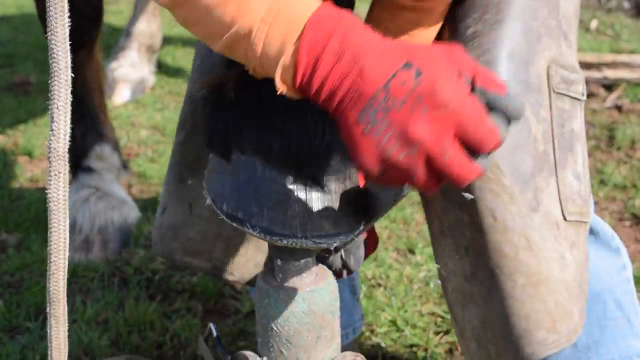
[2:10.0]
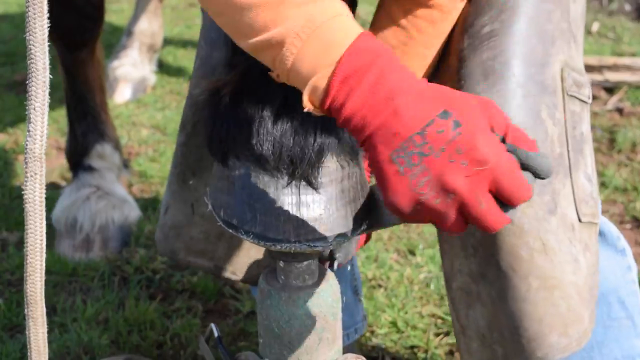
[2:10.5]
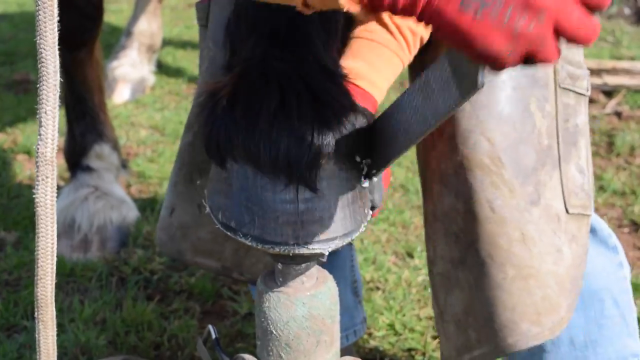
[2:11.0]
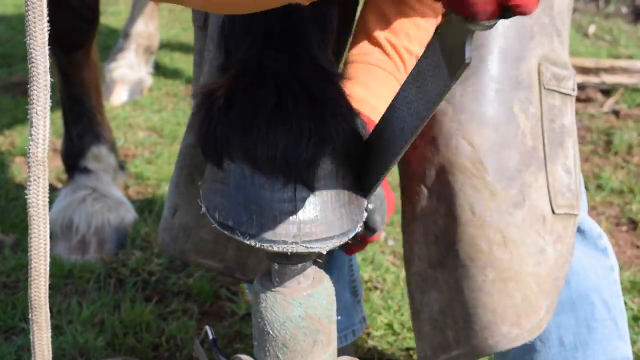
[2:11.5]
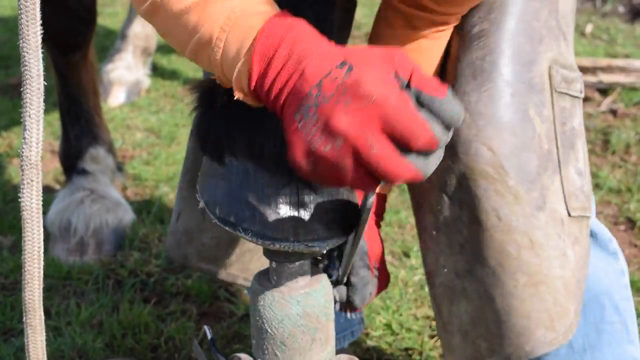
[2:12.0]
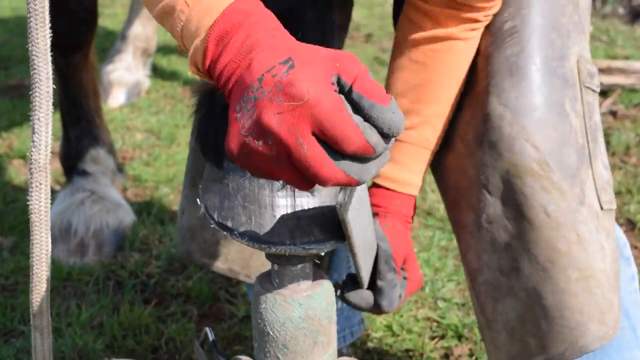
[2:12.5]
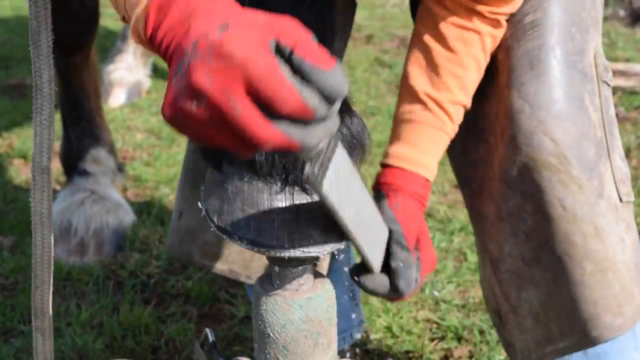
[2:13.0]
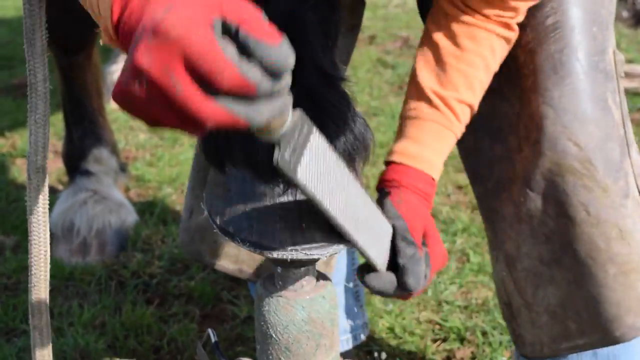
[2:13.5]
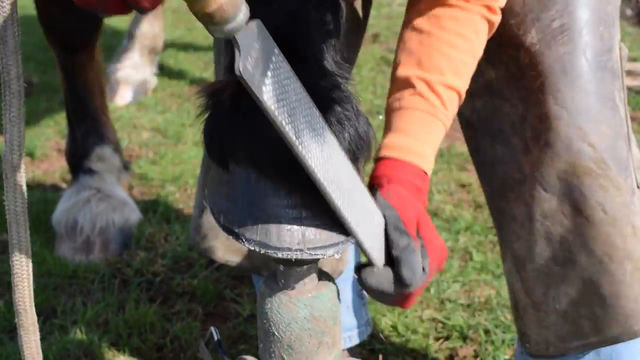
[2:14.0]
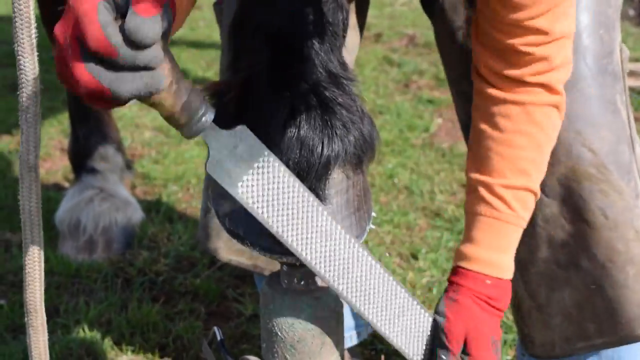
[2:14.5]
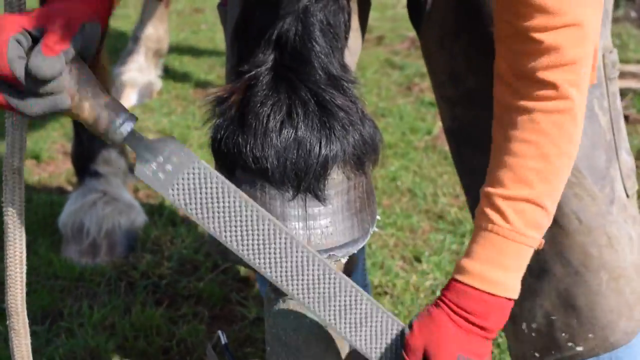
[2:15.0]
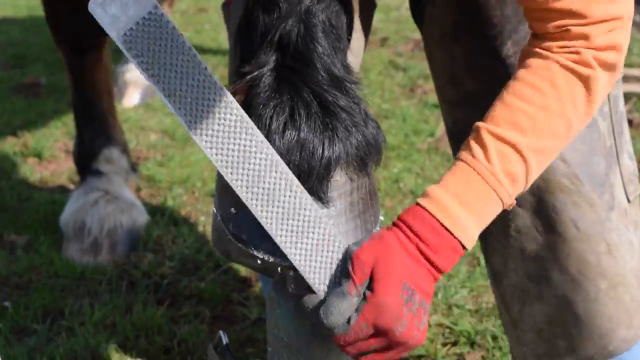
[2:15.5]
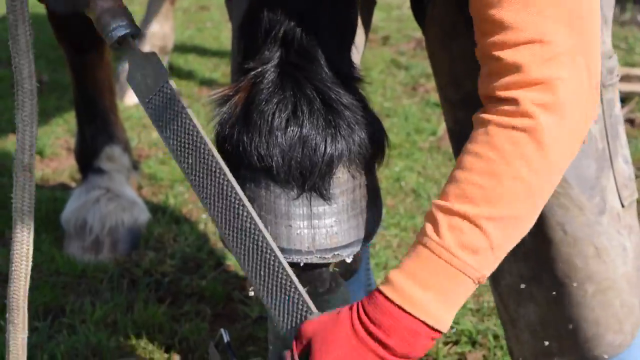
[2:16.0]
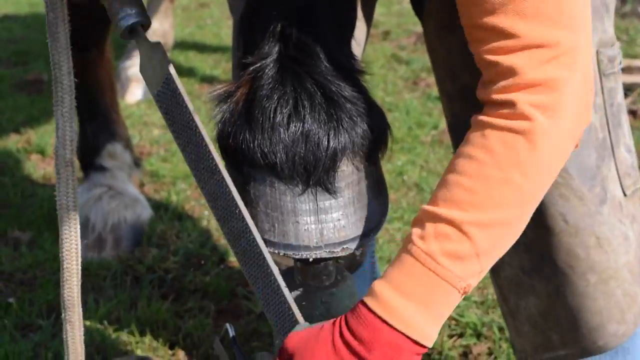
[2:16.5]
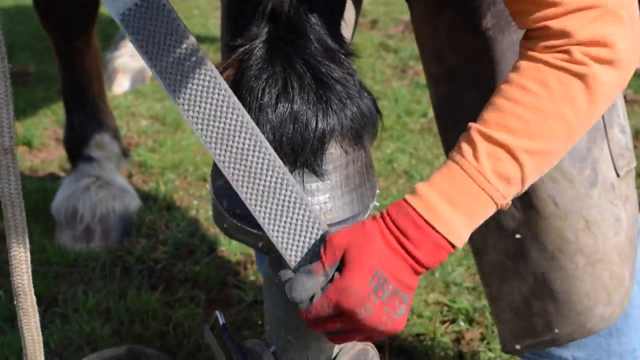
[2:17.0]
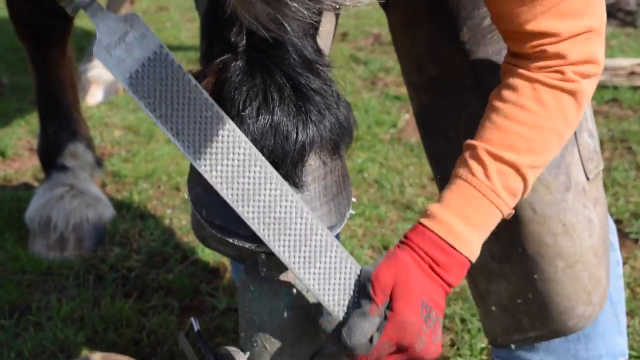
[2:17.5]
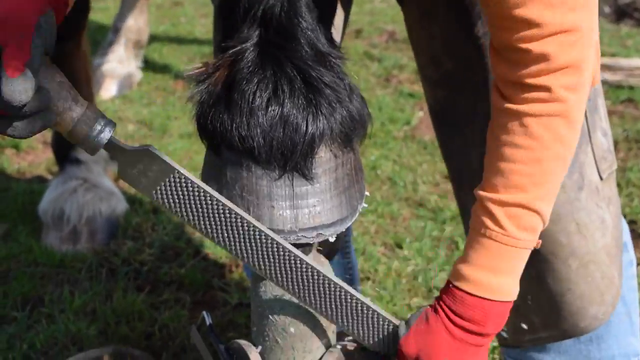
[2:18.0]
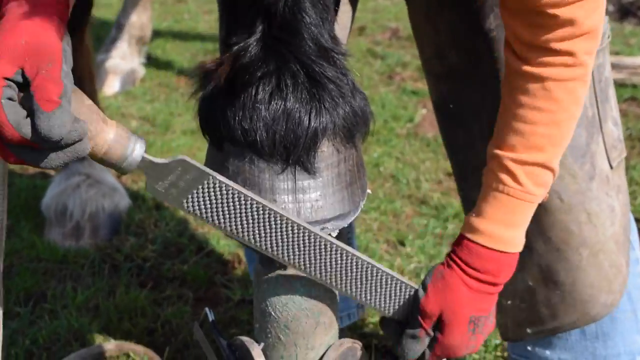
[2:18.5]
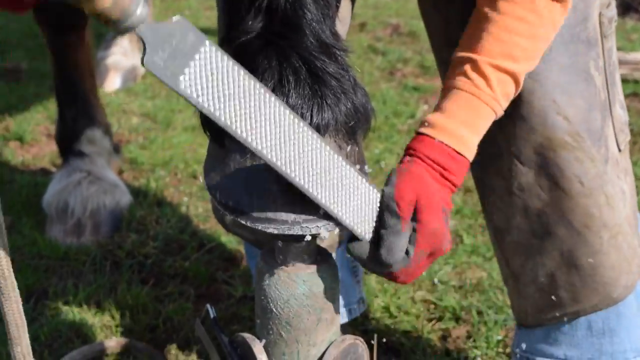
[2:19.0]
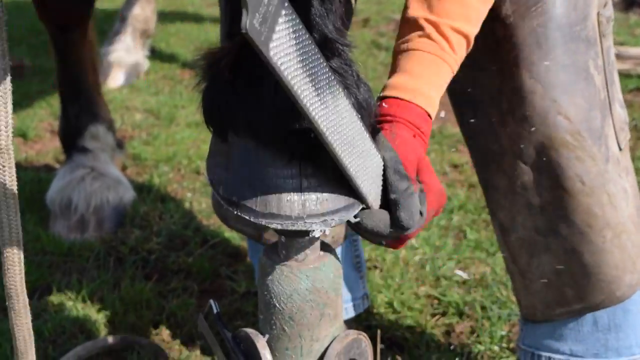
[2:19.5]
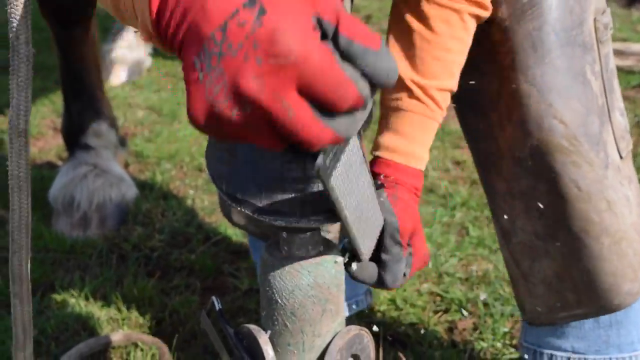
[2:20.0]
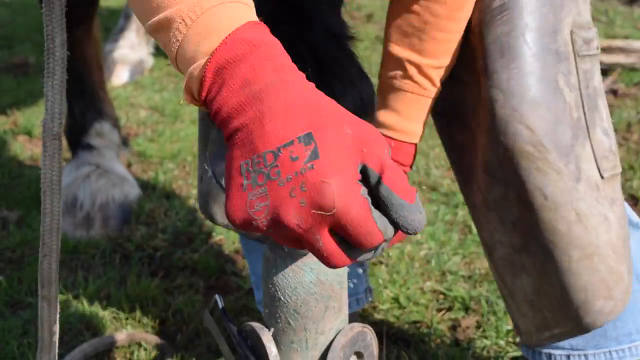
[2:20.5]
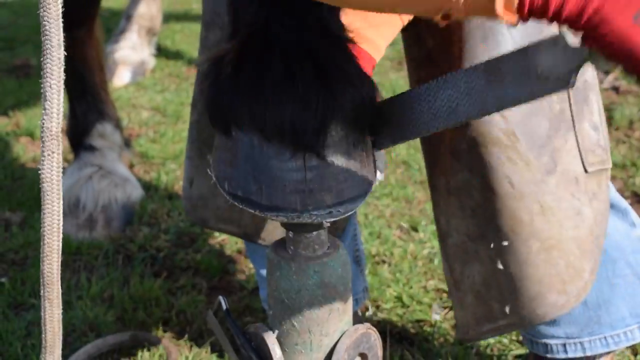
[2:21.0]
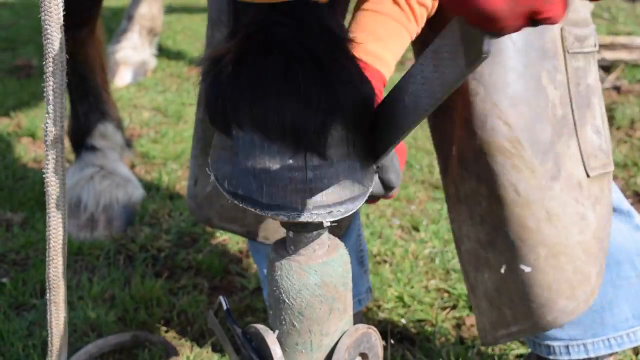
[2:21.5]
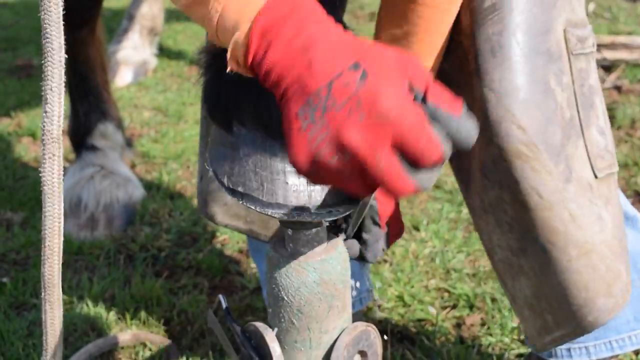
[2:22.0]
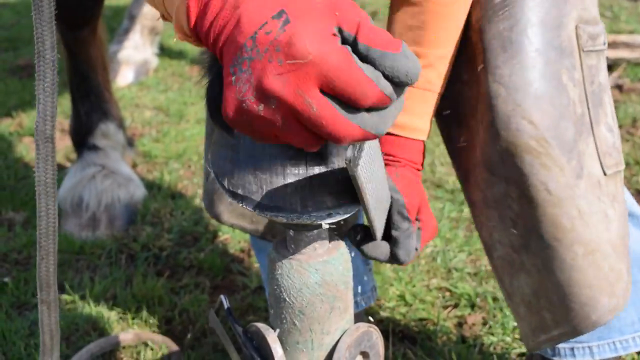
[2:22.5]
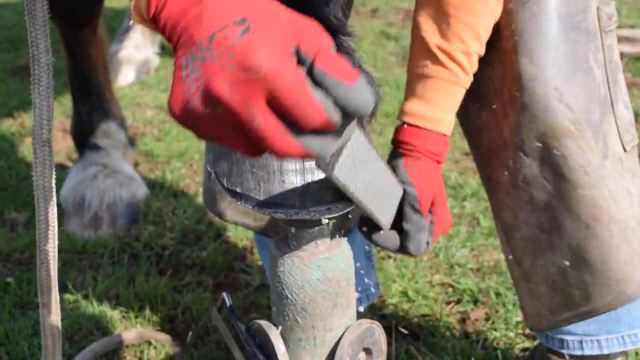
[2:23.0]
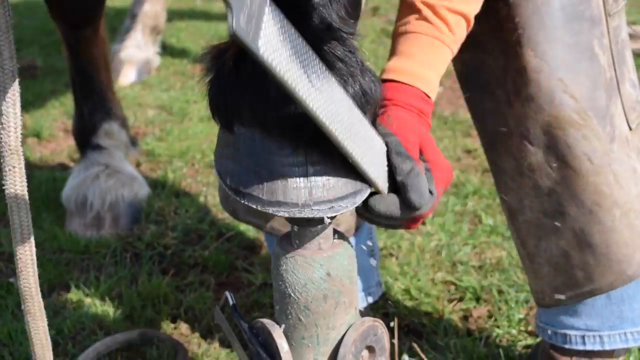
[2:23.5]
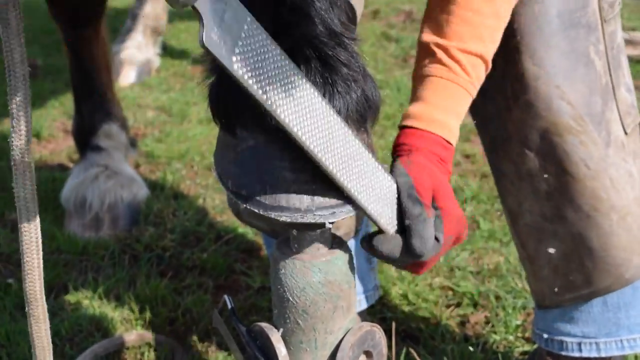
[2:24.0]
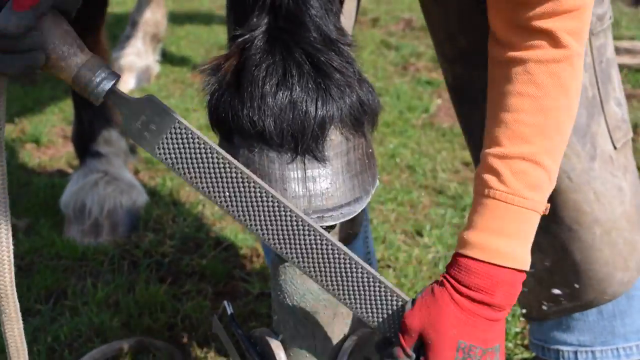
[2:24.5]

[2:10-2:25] She continues filing around the horse's hoof, working on the right side, then going back to the left, moving from side to side and filing off the extra pieces, which fly through the air. As she files, the edges get smoother. The horse still stands still with his foot flat up on a metal prop, some kind of tool for horse grooming. The green grass and the shadows of the horse in the back are still visible. She keeps up a continuous filing motion, apparently using quite a lot of force but not too hard, probably going until it is smooth. She holds the top of the tool with her right hand and the bottom of the tool with her left hand, rotating around the hoof as she works.